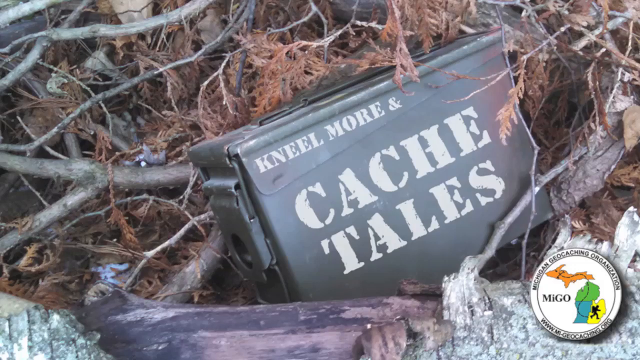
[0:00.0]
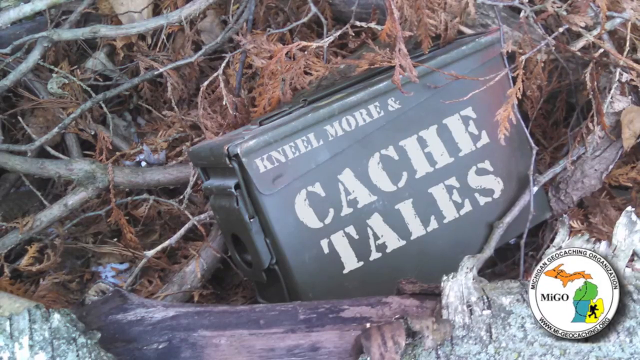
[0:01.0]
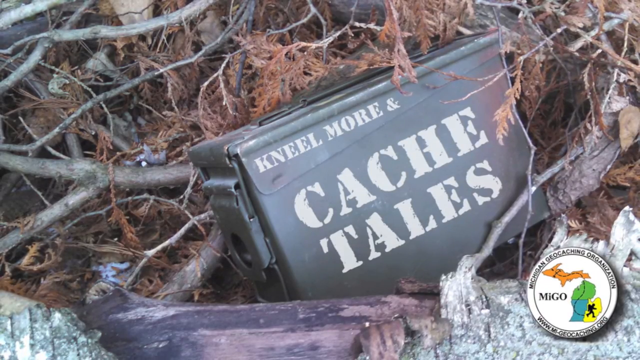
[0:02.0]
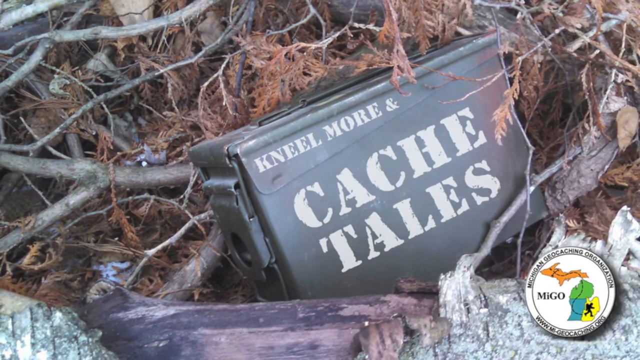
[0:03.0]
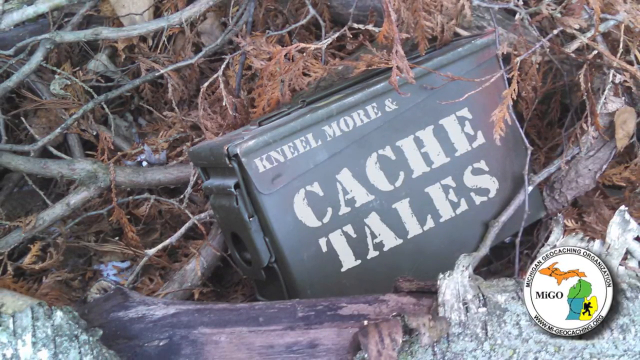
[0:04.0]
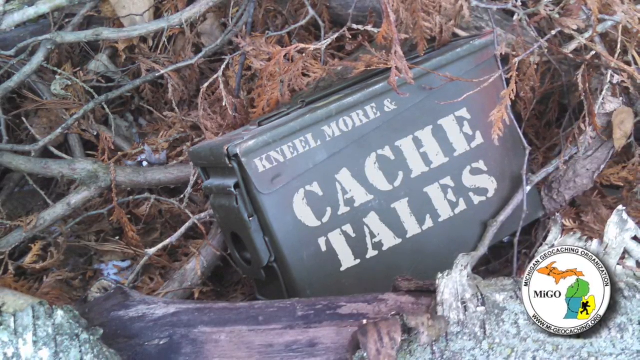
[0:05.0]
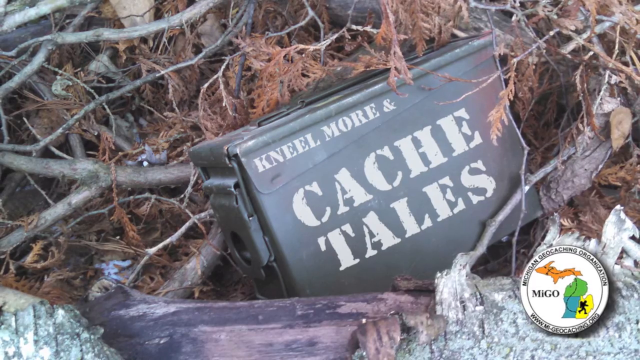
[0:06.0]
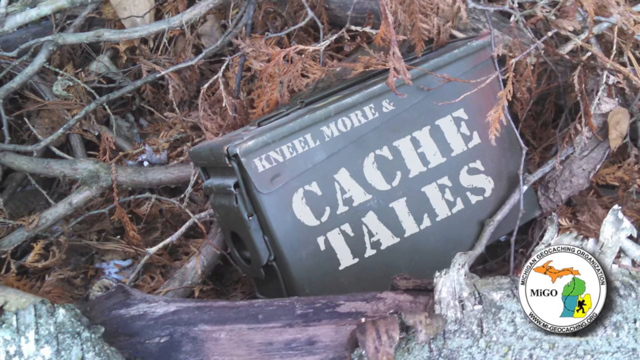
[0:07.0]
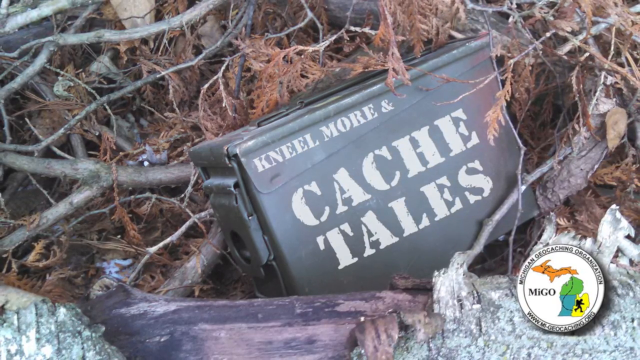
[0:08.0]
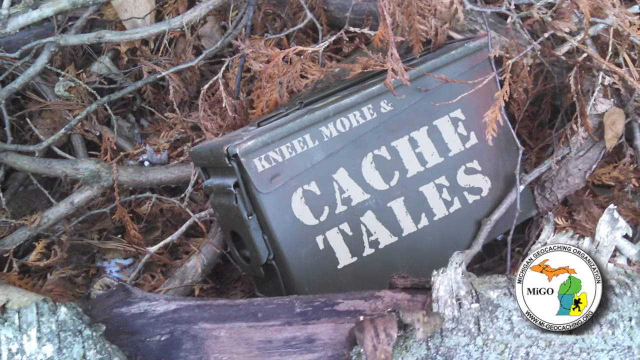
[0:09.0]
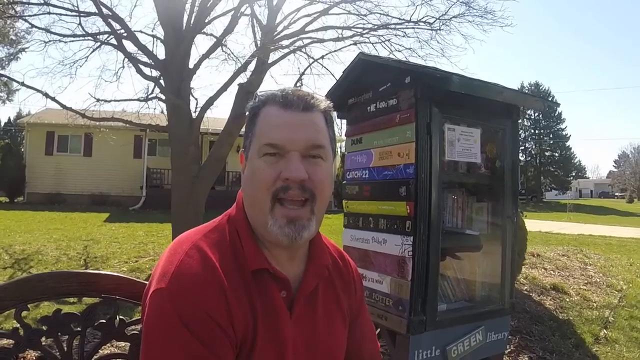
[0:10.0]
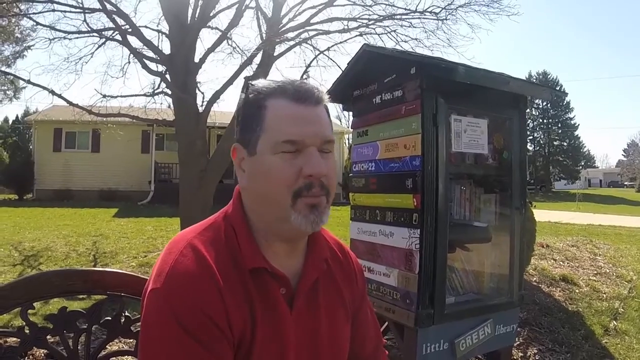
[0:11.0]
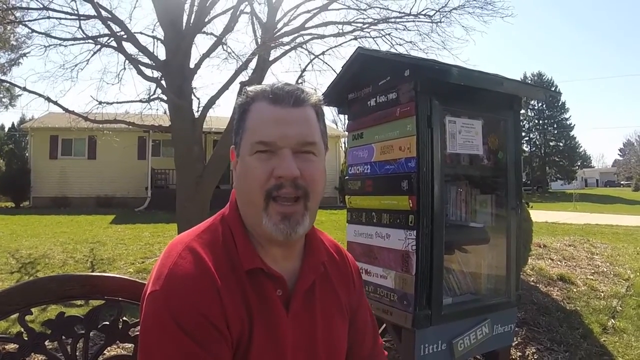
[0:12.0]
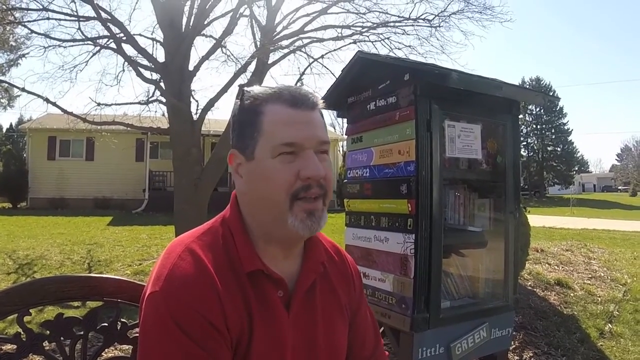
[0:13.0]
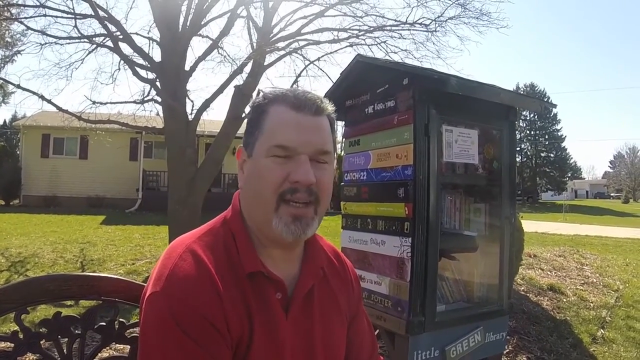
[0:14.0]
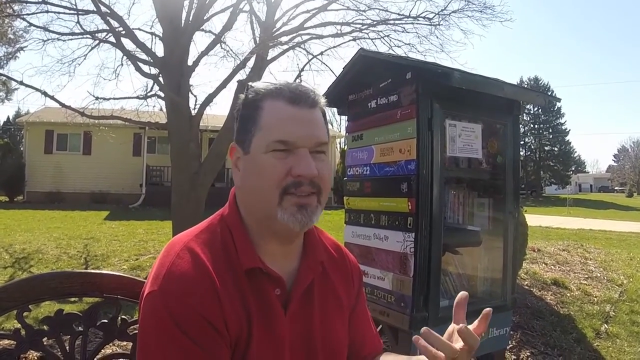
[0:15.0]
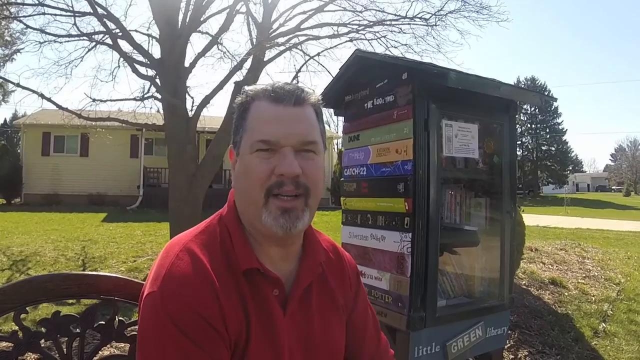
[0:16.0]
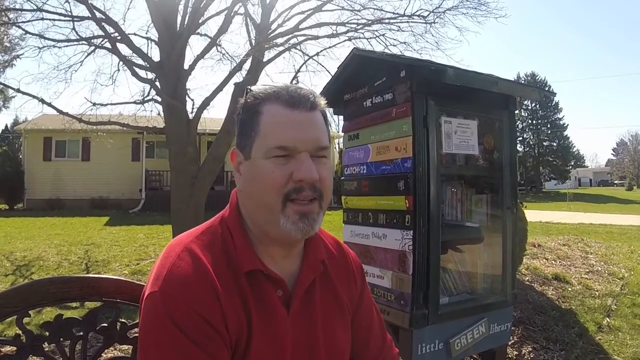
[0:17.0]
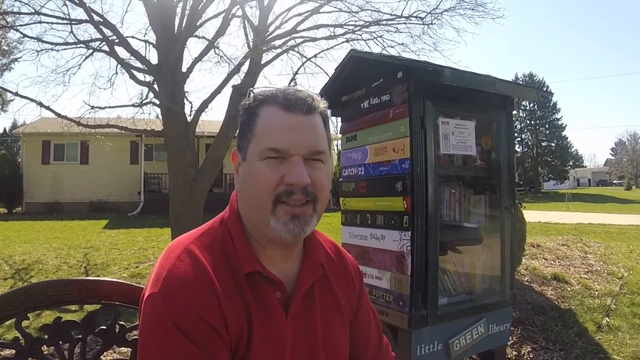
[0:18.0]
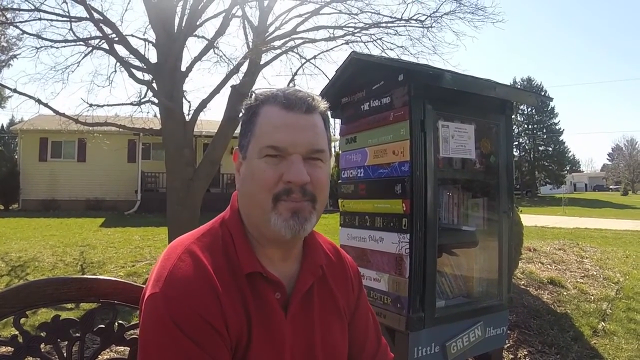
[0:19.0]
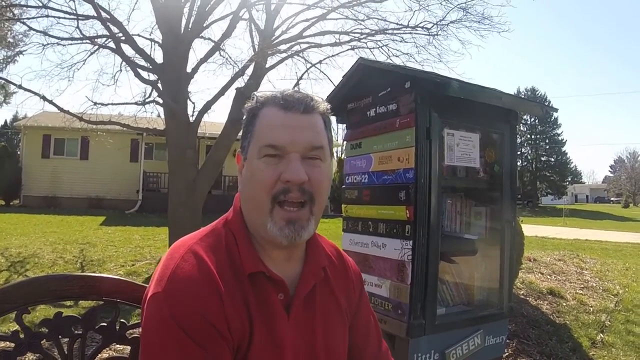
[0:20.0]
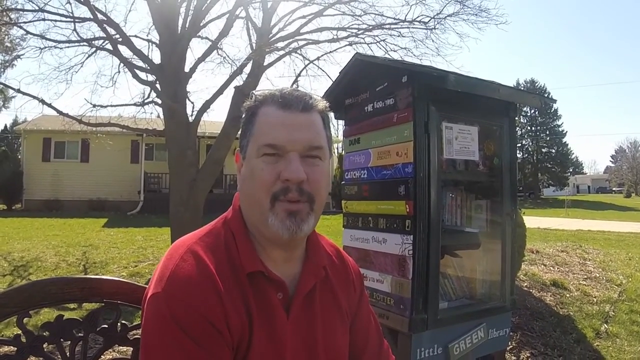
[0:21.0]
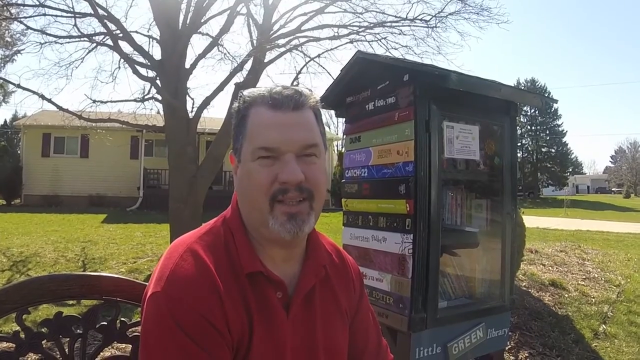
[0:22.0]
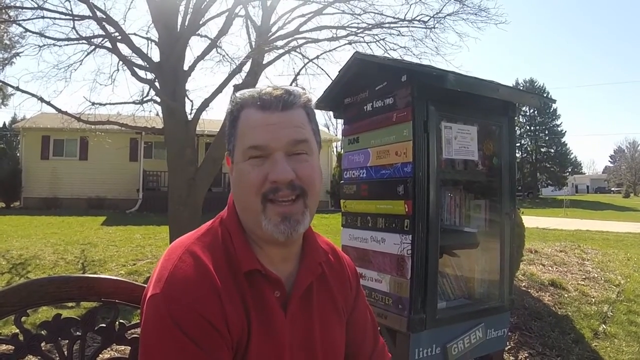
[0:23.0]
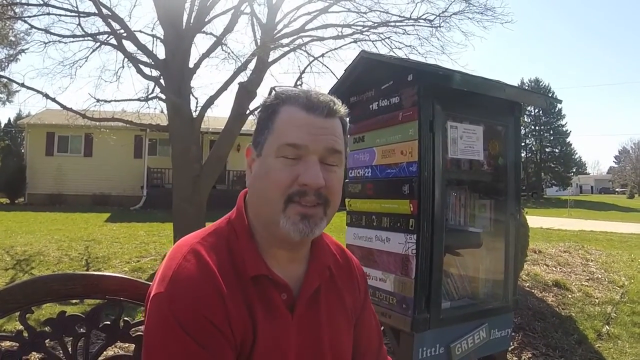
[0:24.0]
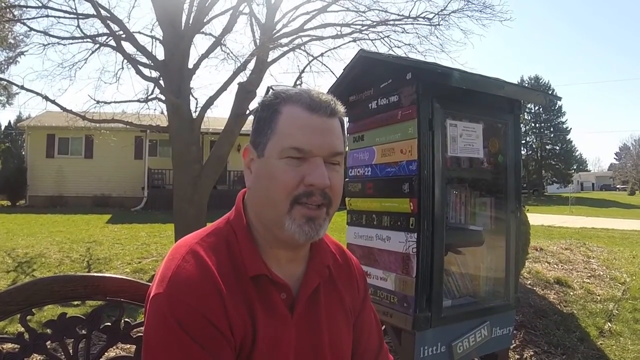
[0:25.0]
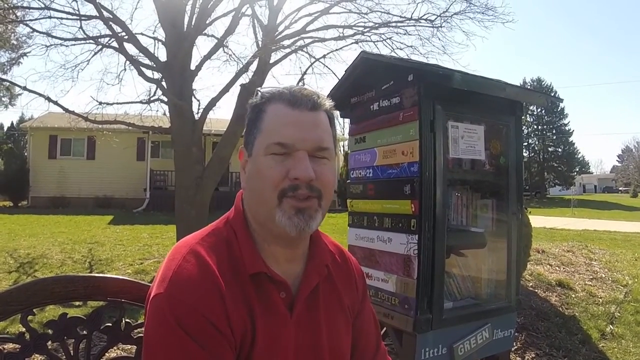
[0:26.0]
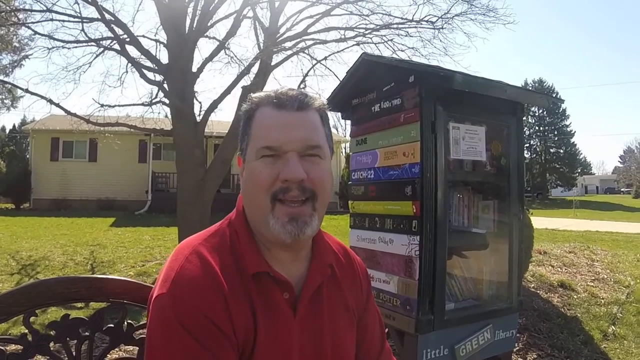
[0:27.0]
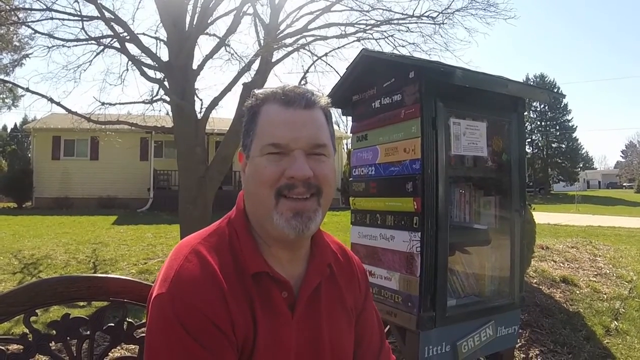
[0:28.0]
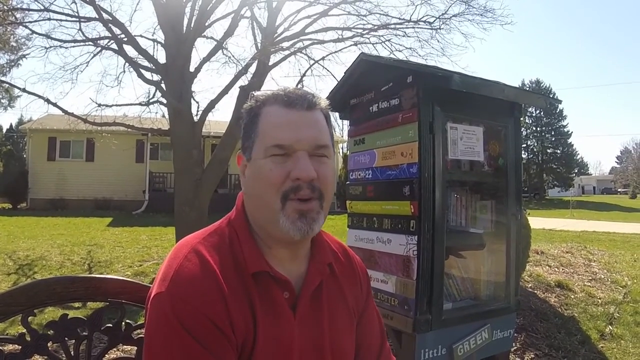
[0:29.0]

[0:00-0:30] The video opens on what looks like an ammo box, possibly sitting in a nest, perhaps a bird's nest, and there is a reference to a Michigan geo-caching organization. A man then appears, possibly talking about the box. He is apparently near a book nook, one of those small libraries left out in front of a house where people can take or leave a book. He is sitting in front of a home, with the house behind him and a tree nearby. He might be sitting on a chair or a bench, or maybe on the curb in front of the house.